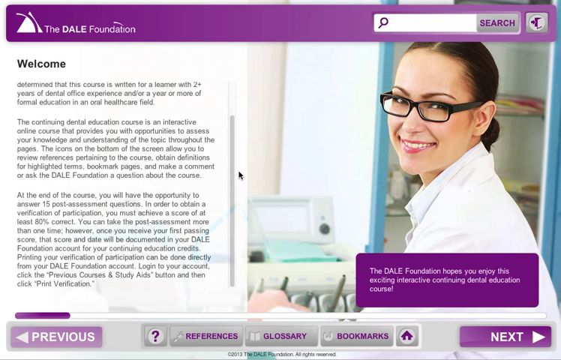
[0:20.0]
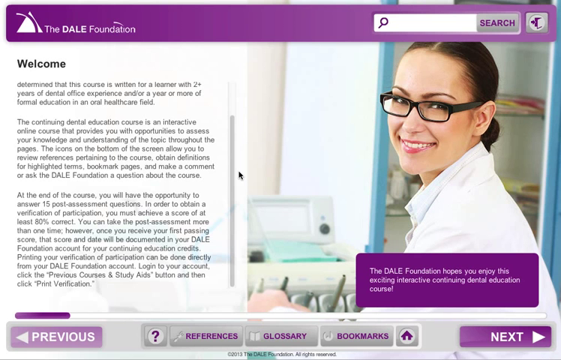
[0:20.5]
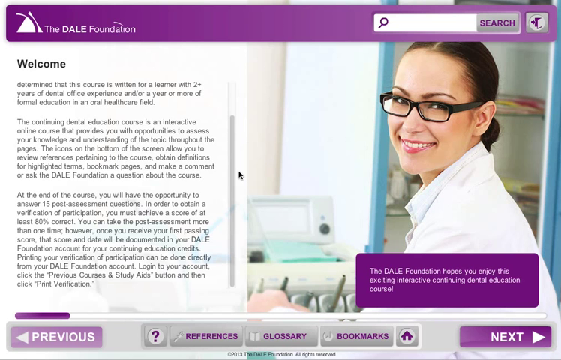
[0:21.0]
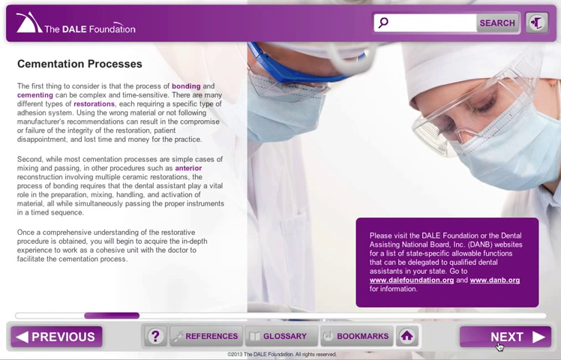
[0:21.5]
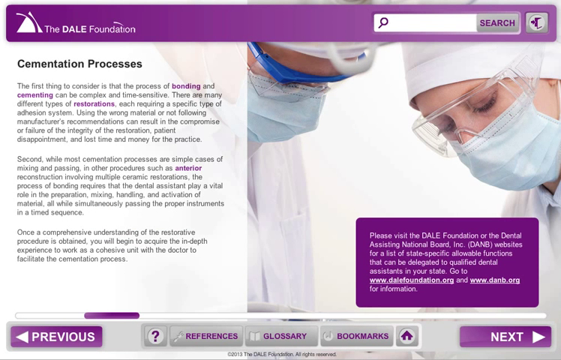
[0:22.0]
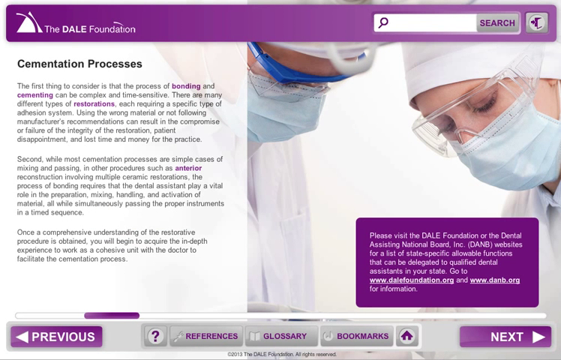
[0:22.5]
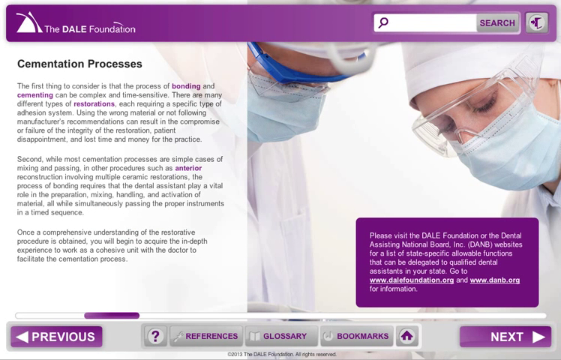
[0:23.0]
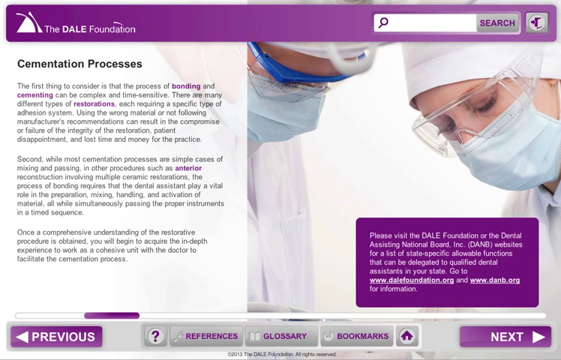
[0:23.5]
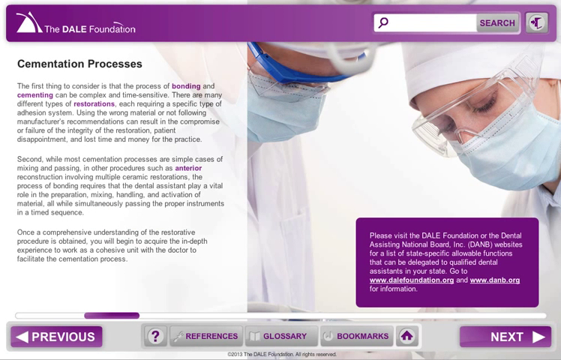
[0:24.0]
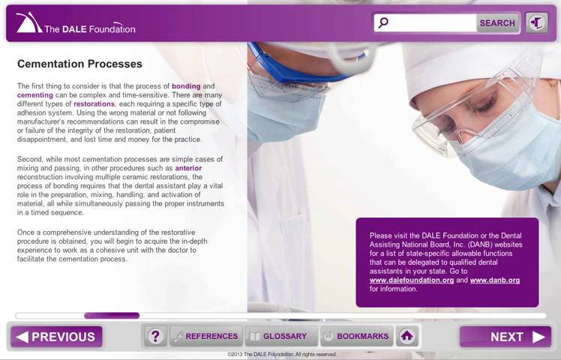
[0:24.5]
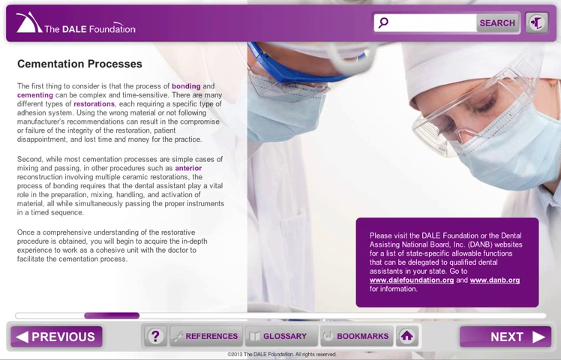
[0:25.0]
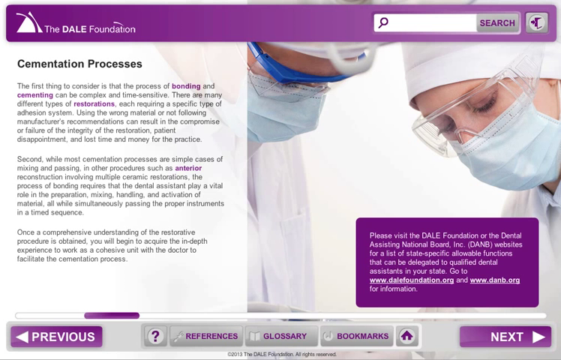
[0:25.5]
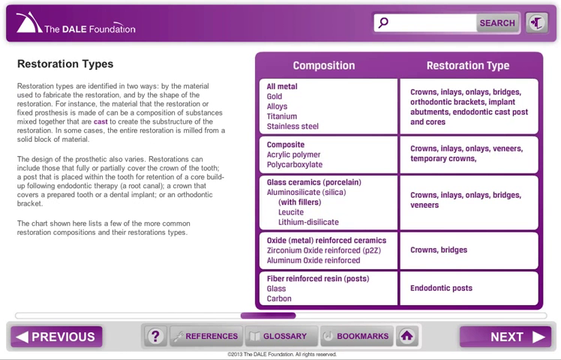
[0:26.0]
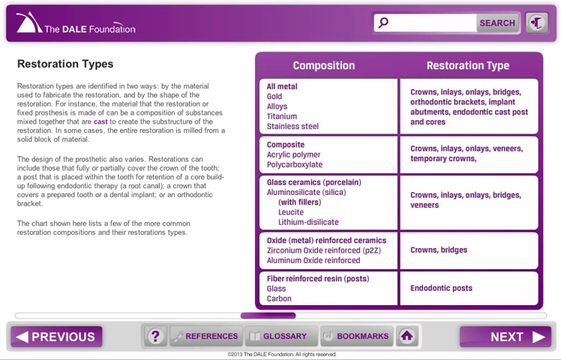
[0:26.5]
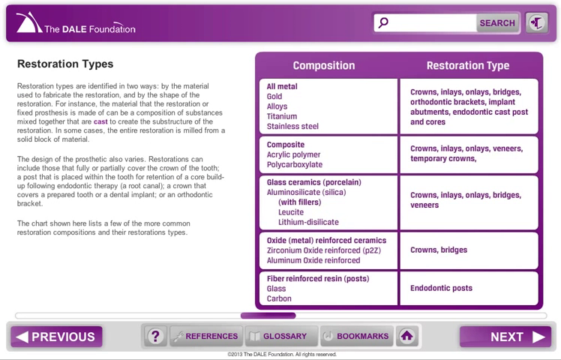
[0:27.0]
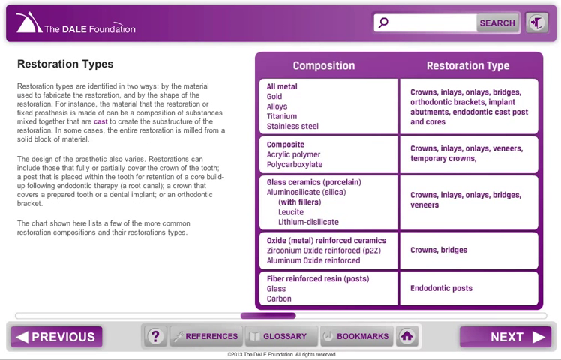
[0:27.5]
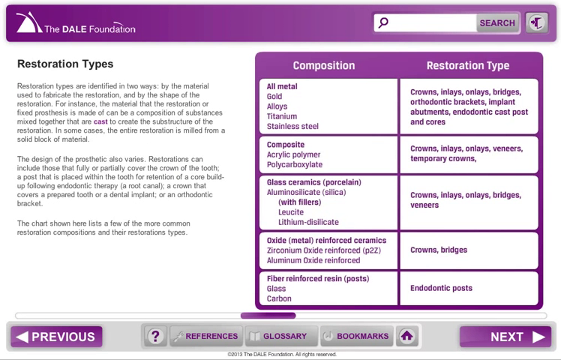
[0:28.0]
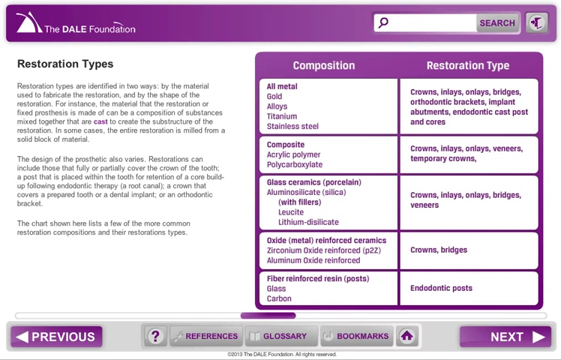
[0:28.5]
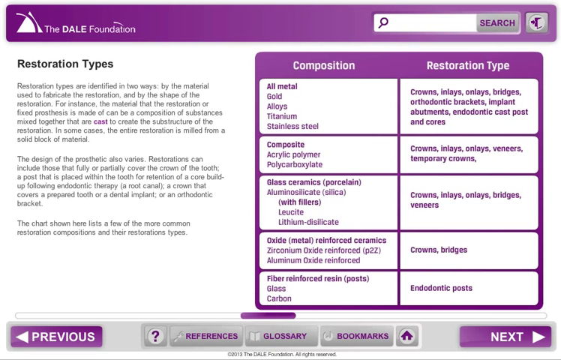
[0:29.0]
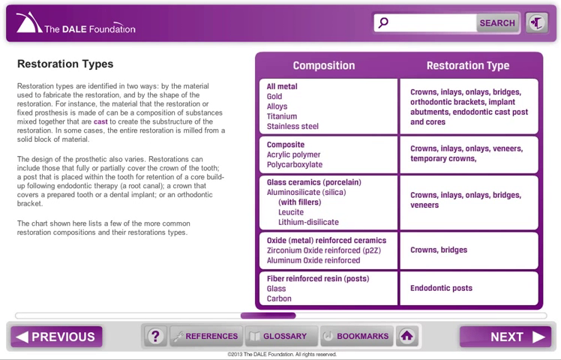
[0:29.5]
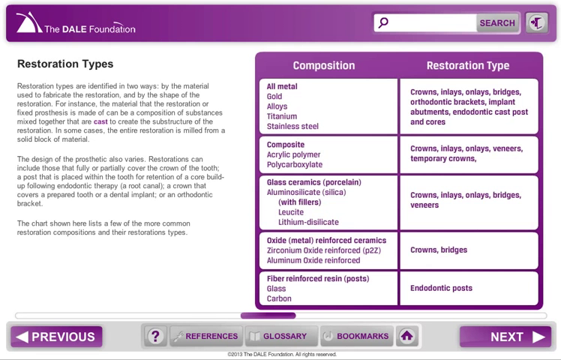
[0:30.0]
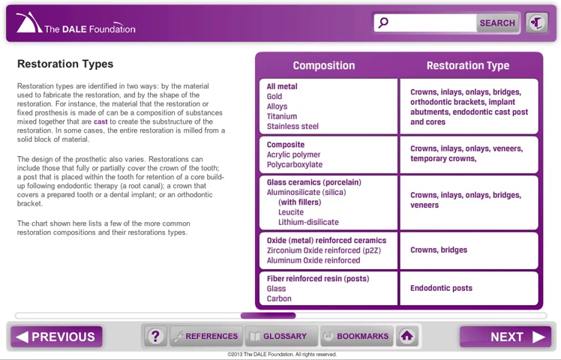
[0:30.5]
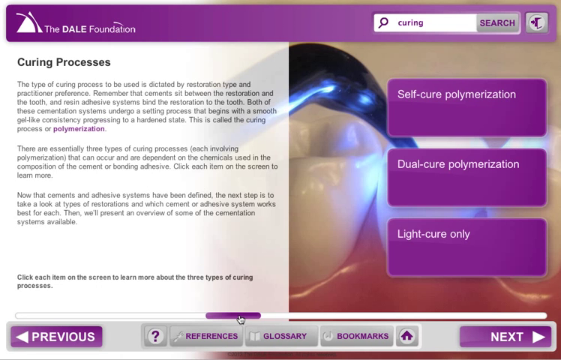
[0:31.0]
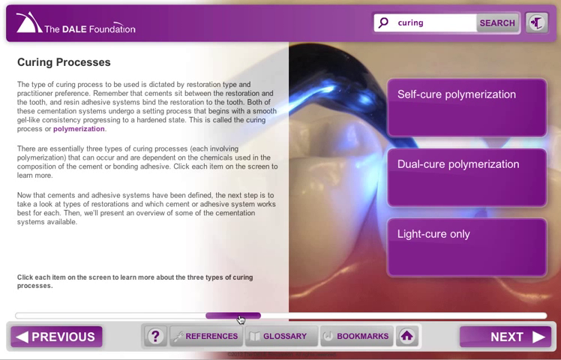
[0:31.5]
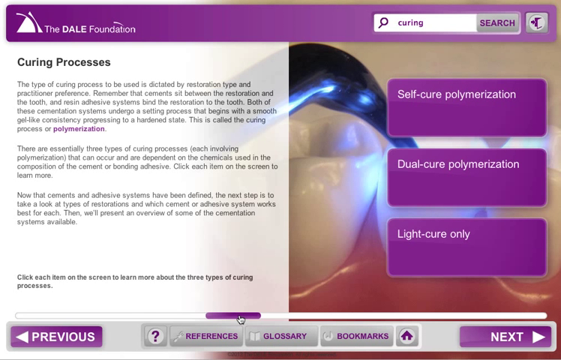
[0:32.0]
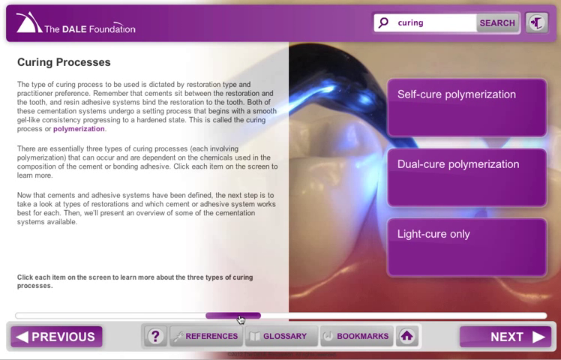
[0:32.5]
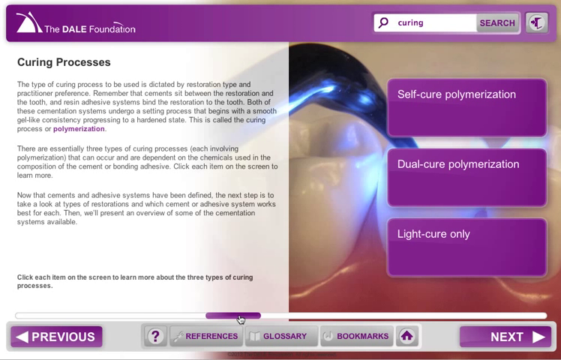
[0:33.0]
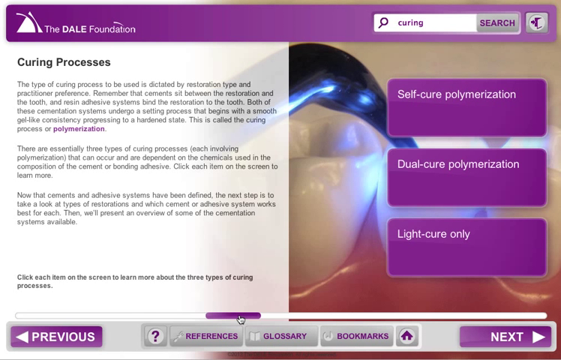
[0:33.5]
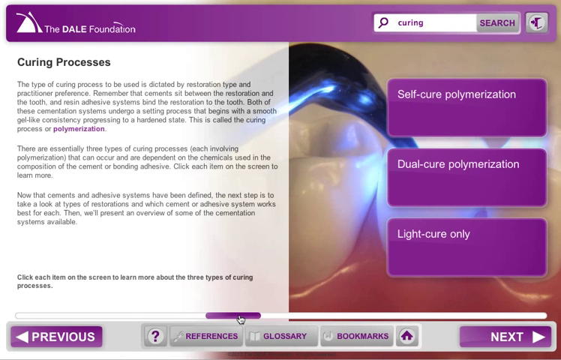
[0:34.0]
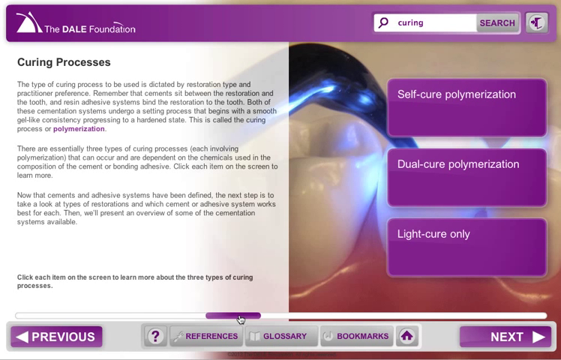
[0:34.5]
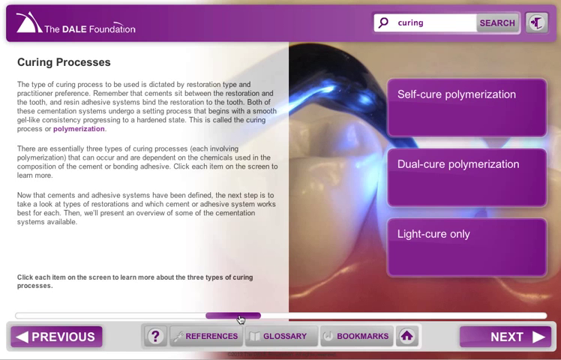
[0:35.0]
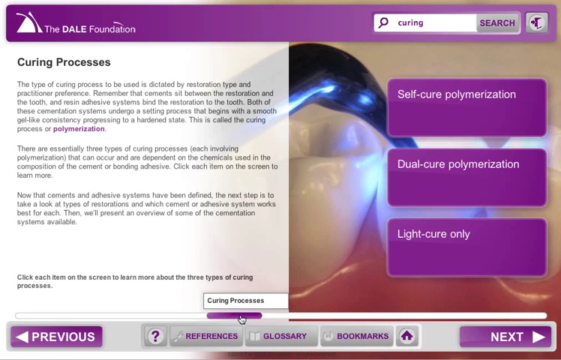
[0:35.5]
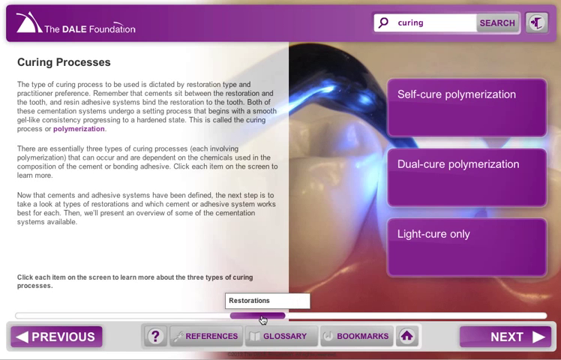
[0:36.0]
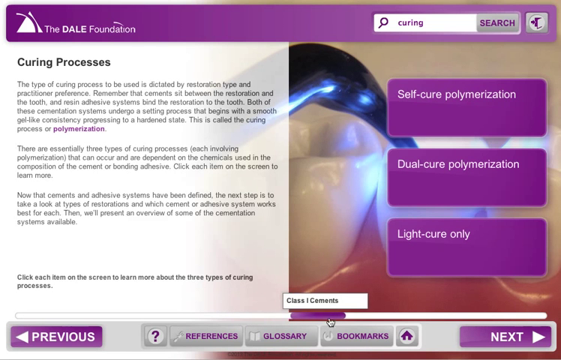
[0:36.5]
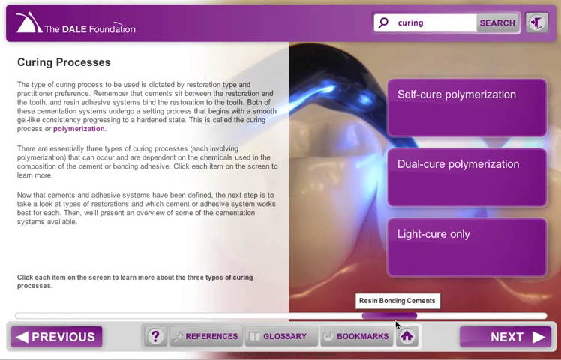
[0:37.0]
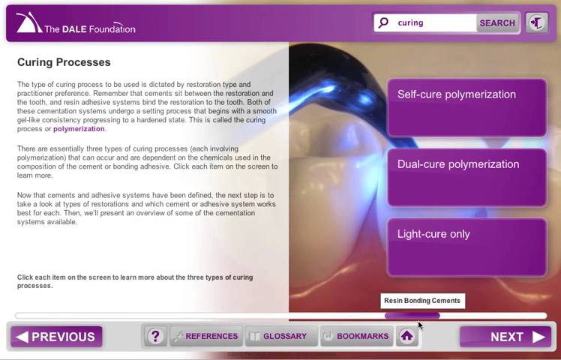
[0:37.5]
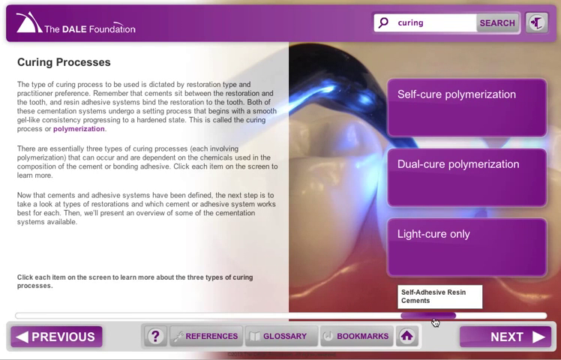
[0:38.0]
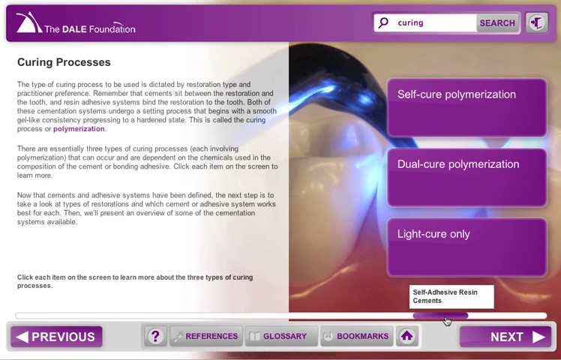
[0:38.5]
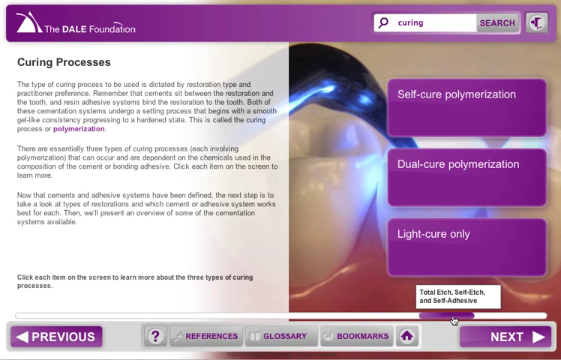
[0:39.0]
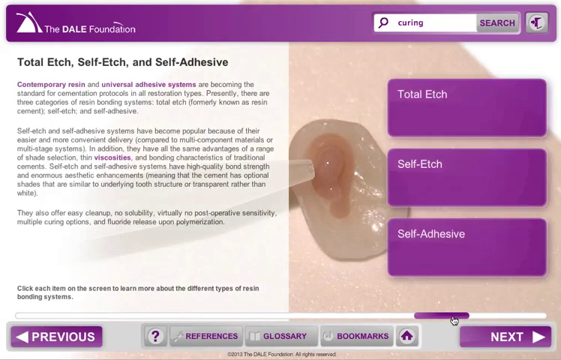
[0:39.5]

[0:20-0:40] The purple search bar remains at the top of the screen. In the bottom right, another text box with a purple background reads "the Dale Foundation hopes you enjoy this exciting interactive continuing dental education course". On the left, the text has moved to the next page and shows information about the dental education course. A new page is titled "Cementation Processes" and reads "The first thing to consider is that the process of bonding and cementing can be complex and time sensitive", followed by more information. The text box in the bottom right now reads "please visit the Dale Foundation or the Dental Assisting National Board, Inc. websites for a list of state-specific allowable functions that can be delegated to qualified dental assistants in your state." At the bottom of the screen are controls to go to the previous or next page, and in the middle are clickable references, glossary and bookmarks options. A restoration types page follows, with a grid on the right showing the differences between composition and restoration types and some information on the left. Next comes a curing processes page, with text boxes on the right reading "self-cure", "dual core" and "light cure"; moving across the screen brings up more information.